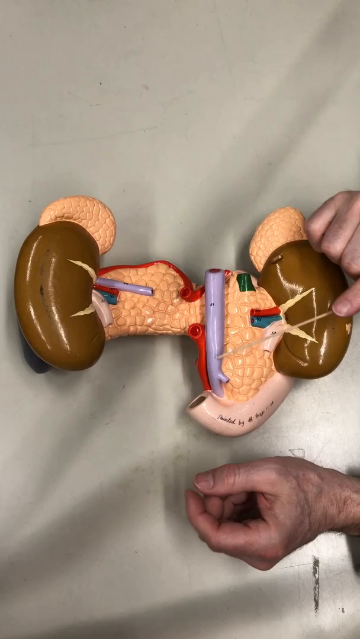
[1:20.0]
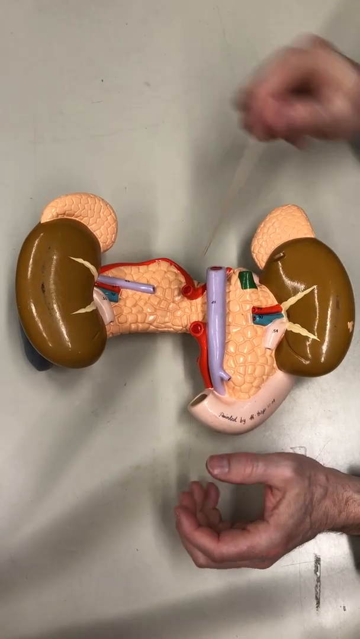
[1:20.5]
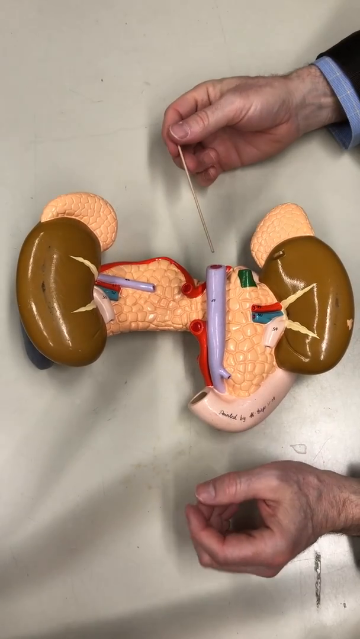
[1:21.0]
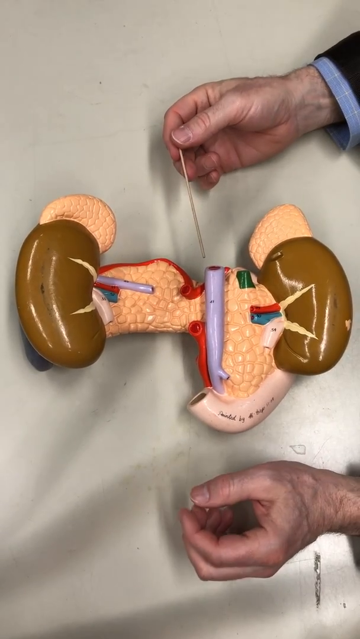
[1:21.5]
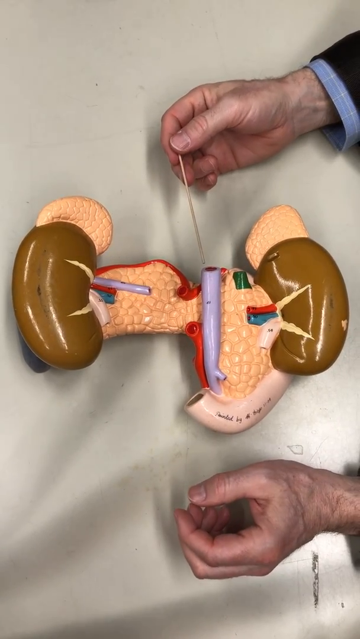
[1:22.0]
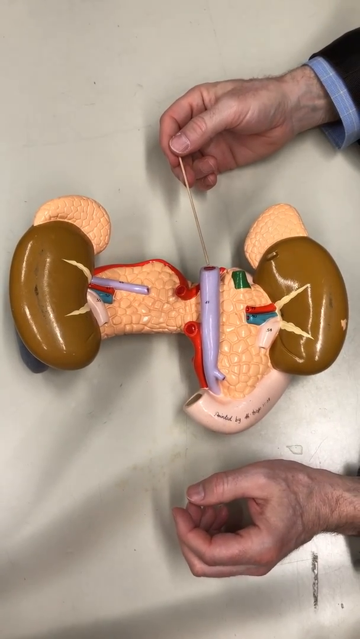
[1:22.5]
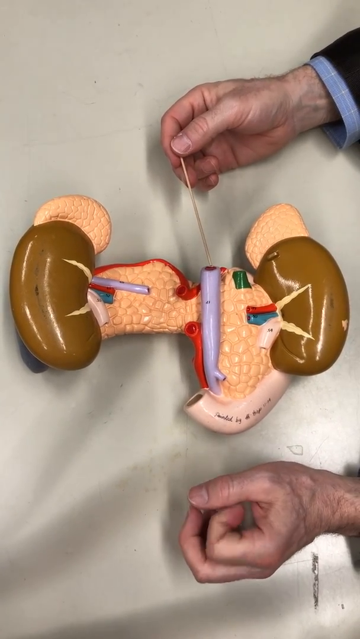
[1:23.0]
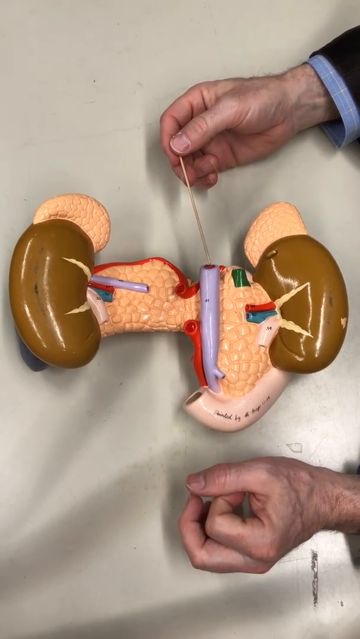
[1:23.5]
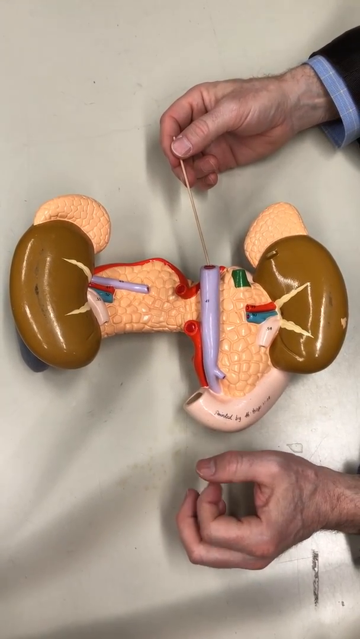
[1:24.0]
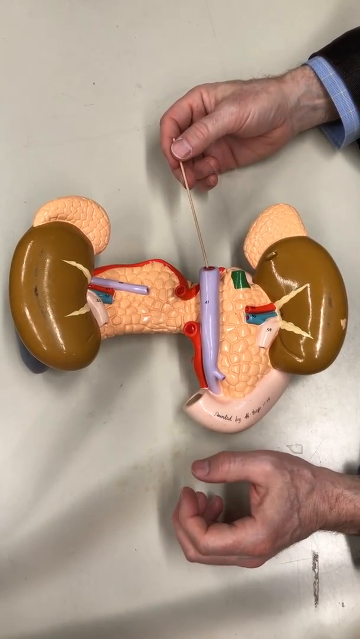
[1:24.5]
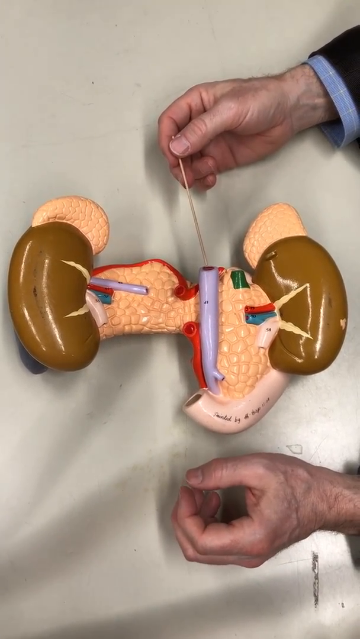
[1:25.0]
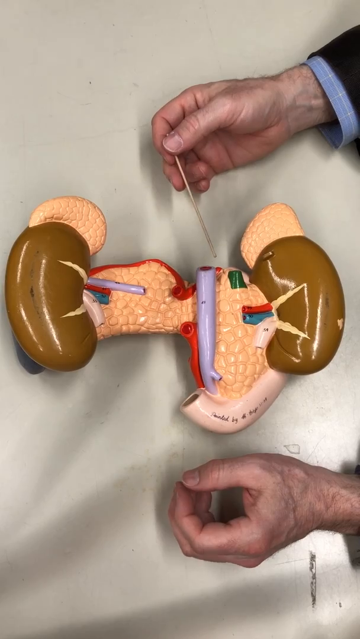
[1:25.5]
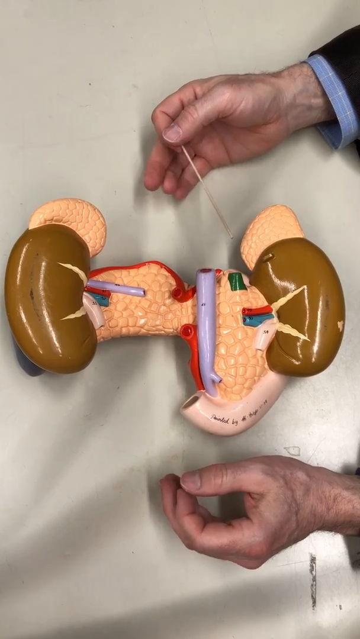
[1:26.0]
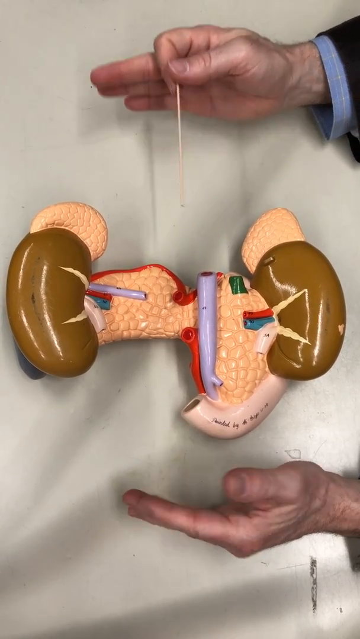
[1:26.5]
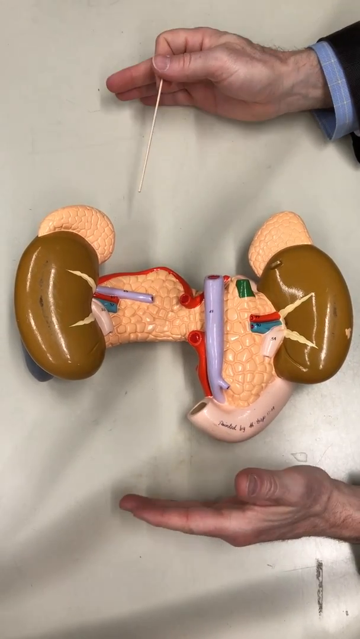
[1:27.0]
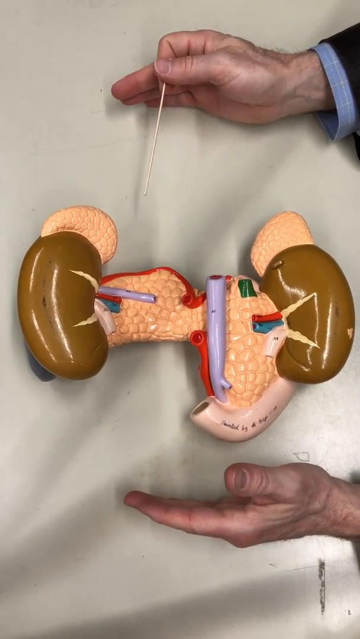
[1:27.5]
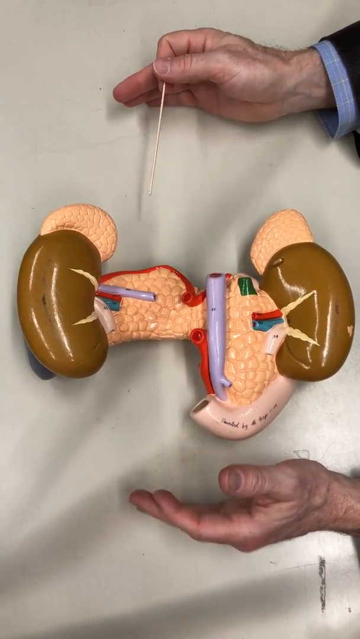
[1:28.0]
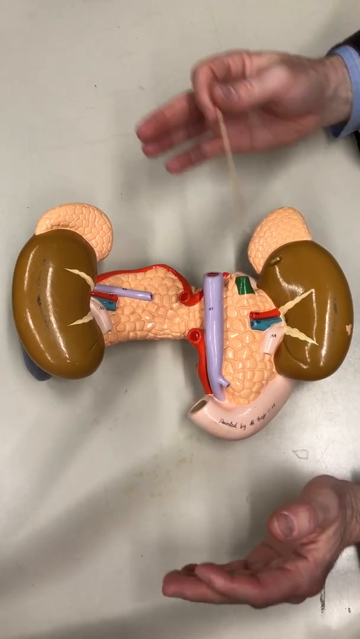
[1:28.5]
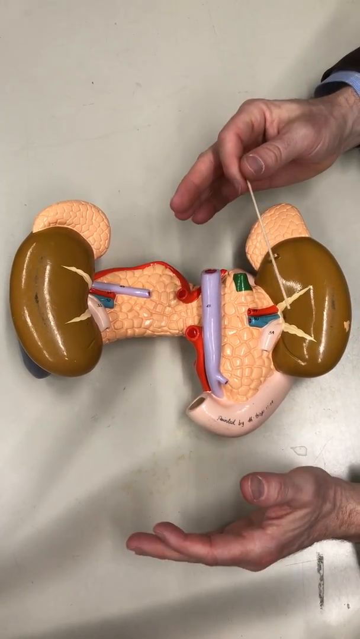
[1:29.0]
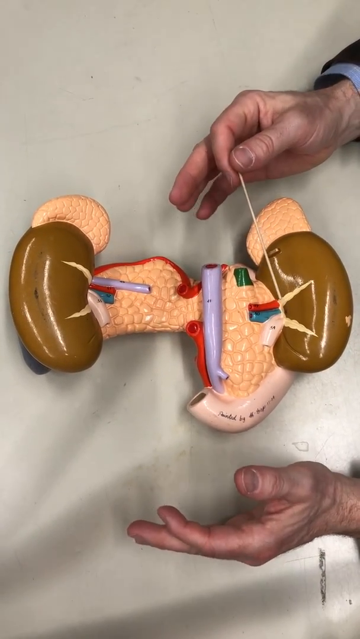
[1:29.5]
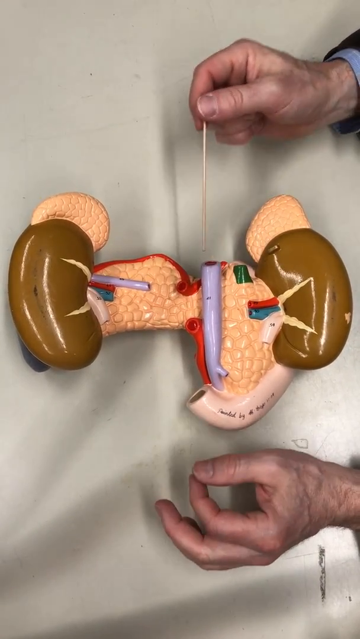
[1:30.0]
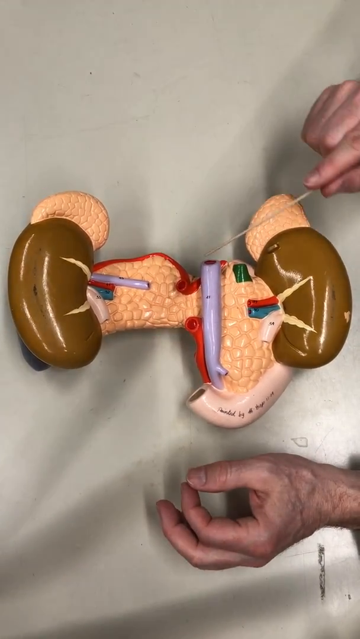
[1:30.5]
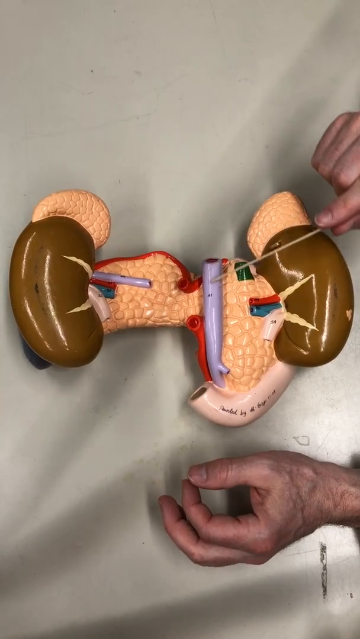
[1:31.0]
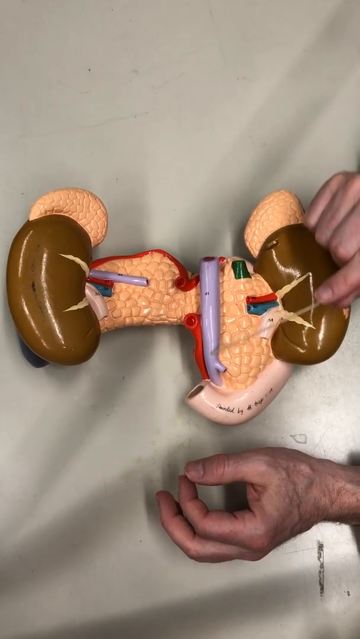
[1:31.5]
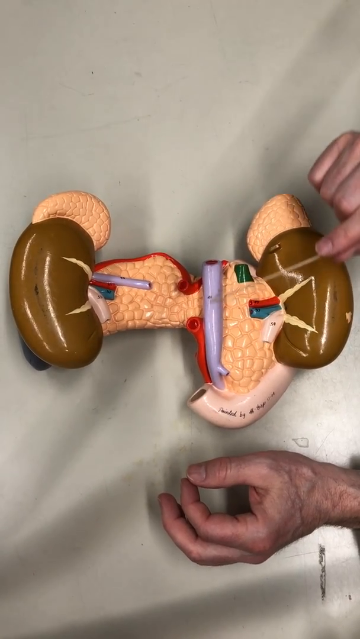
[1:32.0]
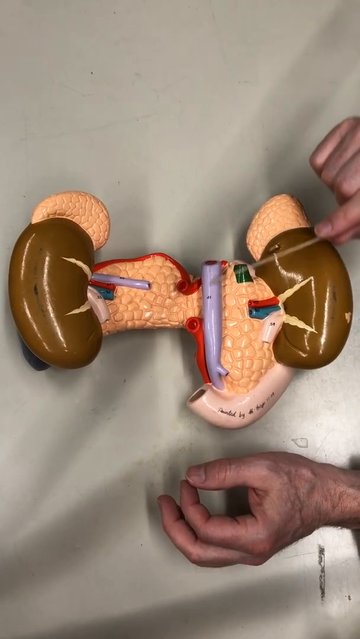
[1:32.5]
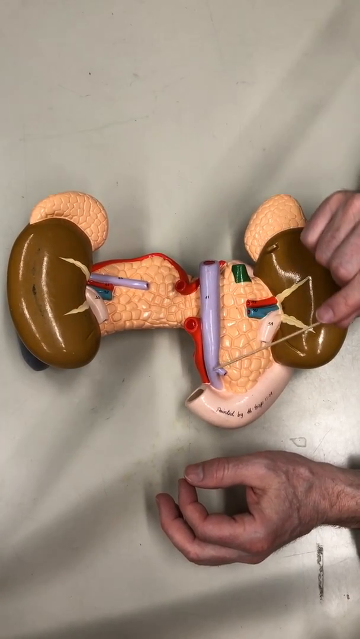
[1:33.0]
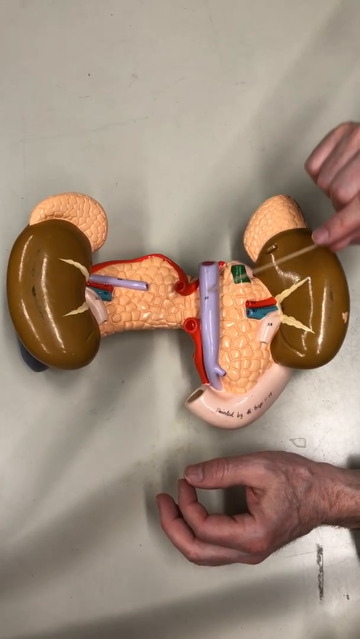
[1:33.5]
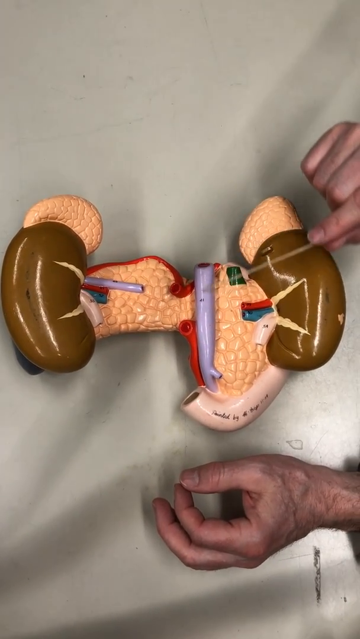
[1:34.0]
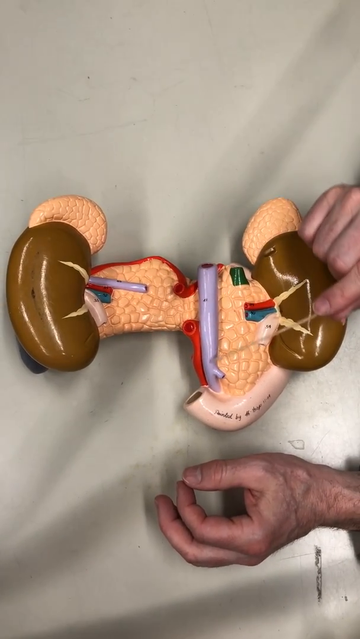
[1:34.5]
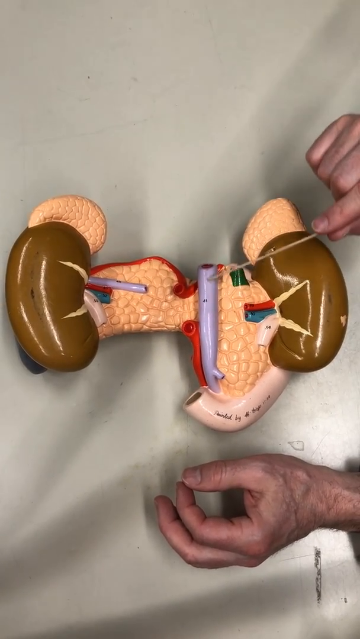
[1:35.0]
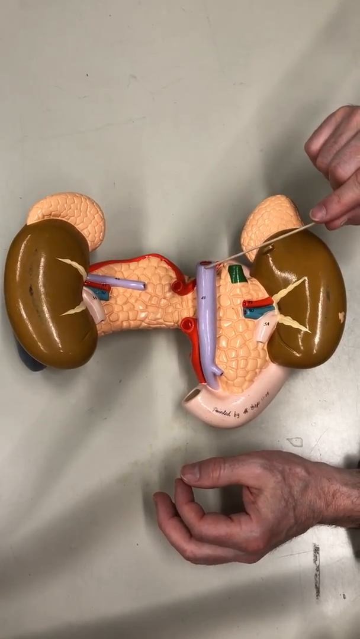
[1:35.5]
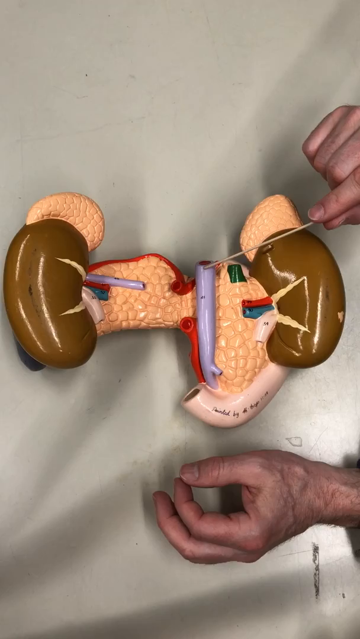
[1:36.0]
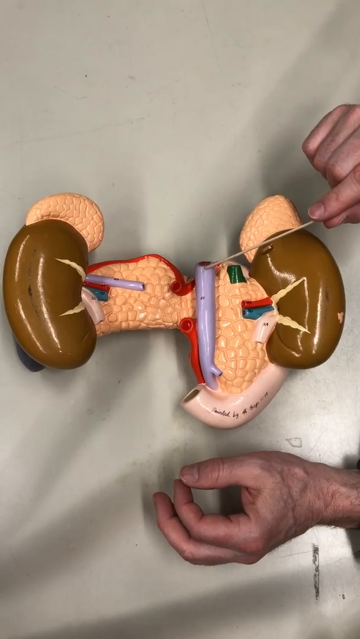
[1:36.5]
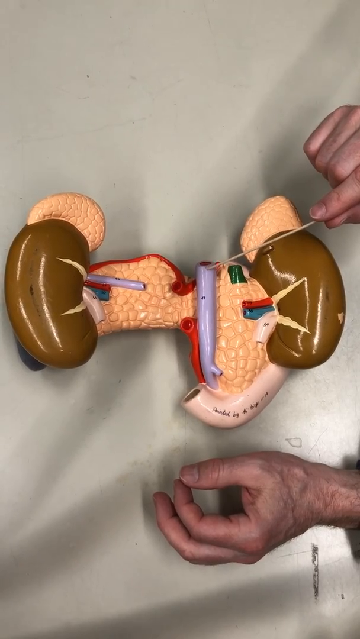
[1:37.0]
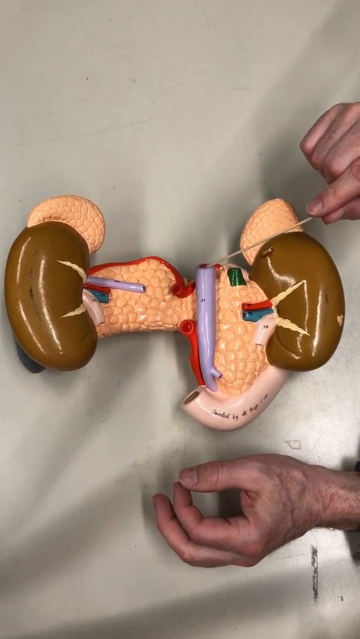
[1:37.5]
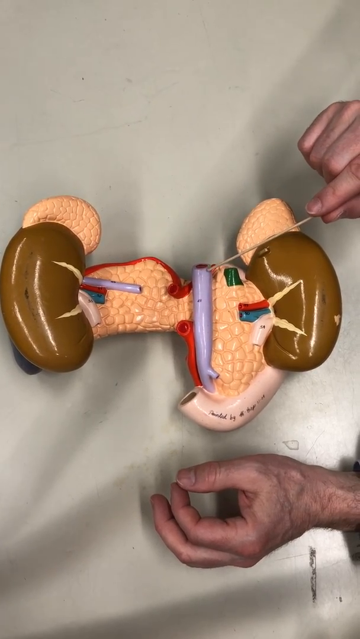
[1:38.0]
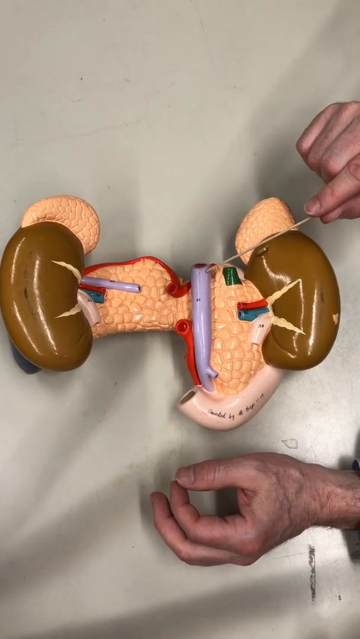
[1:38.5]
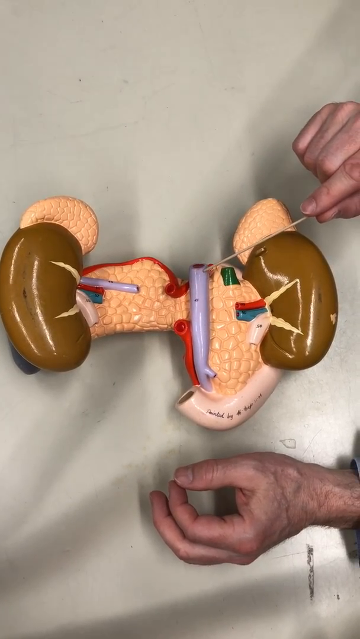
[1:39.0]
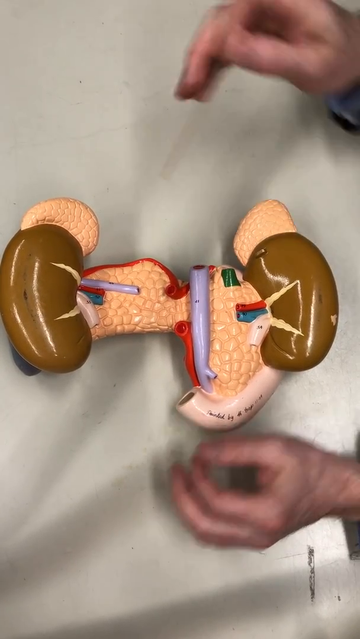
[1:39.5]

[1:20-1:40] With the object turned around, the length of the purple valve is shown. The hand at the bottom moves the green part slightly while the hand on top keeps pointing at the valve, which apparently transfers nutrients within the body. He points up and down along the valve repeatedly and also points to an opening through which whatever is transported along the valve passes. He then appears to stop. Only the hands of the teacher or lecturer are visible.